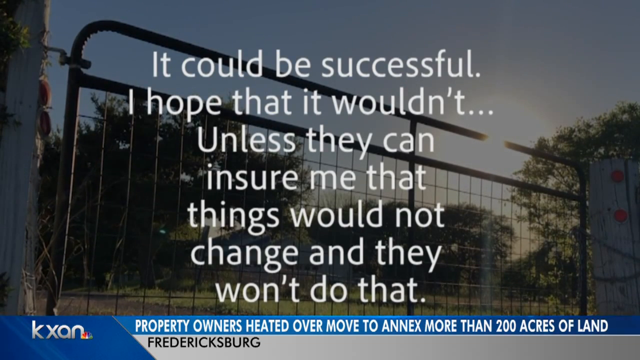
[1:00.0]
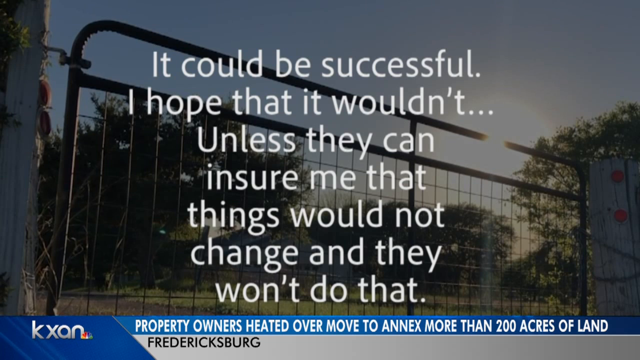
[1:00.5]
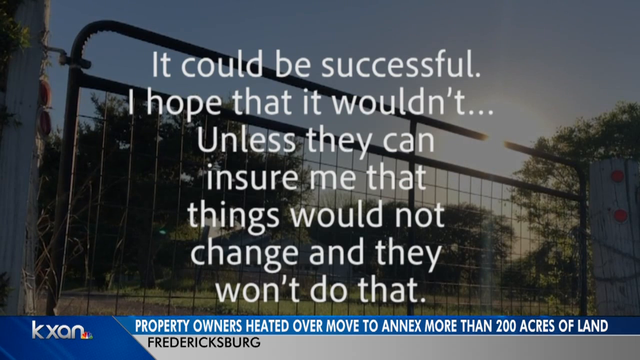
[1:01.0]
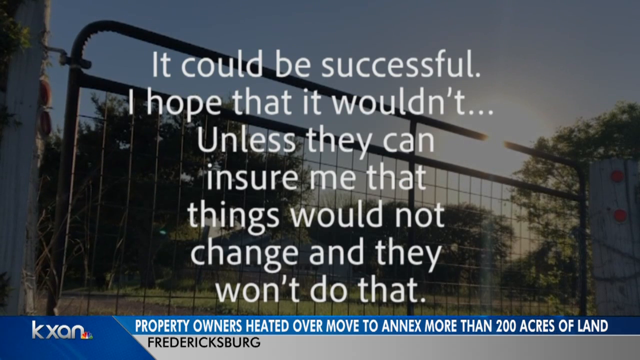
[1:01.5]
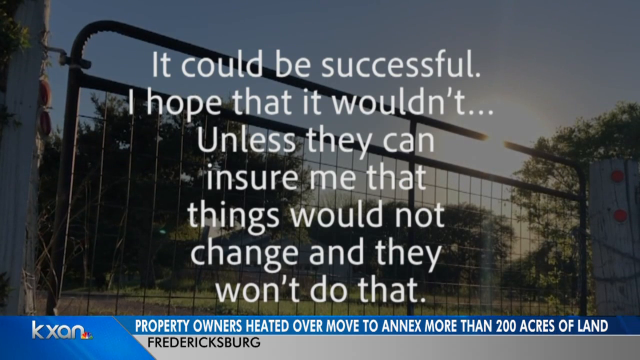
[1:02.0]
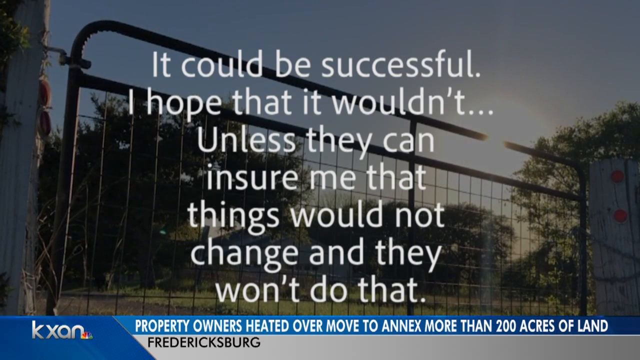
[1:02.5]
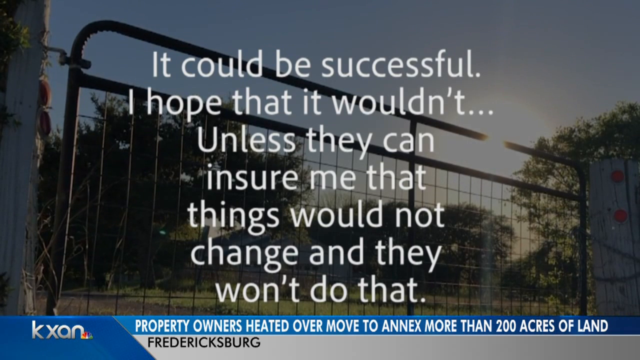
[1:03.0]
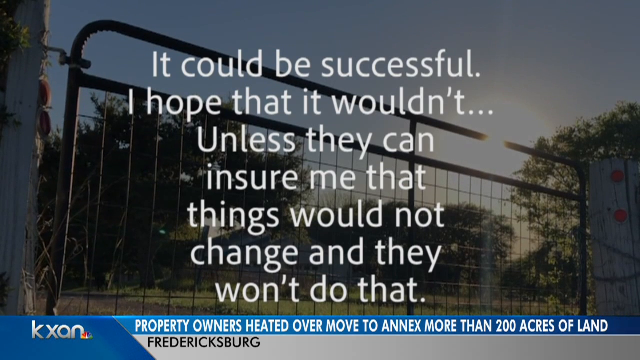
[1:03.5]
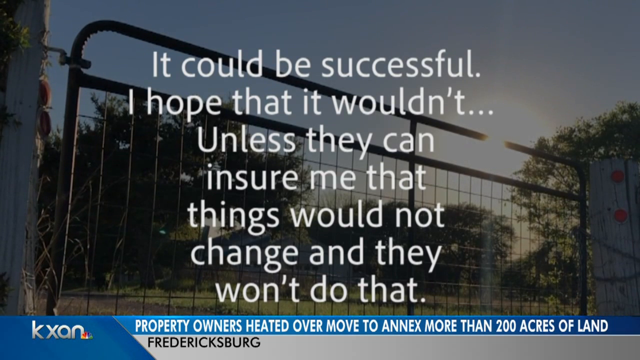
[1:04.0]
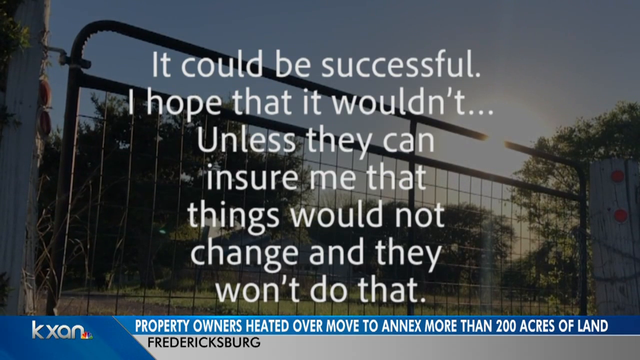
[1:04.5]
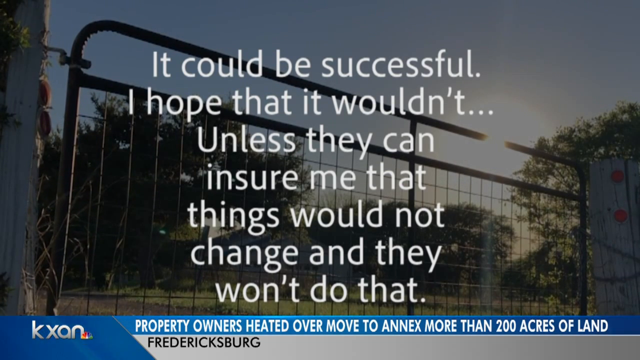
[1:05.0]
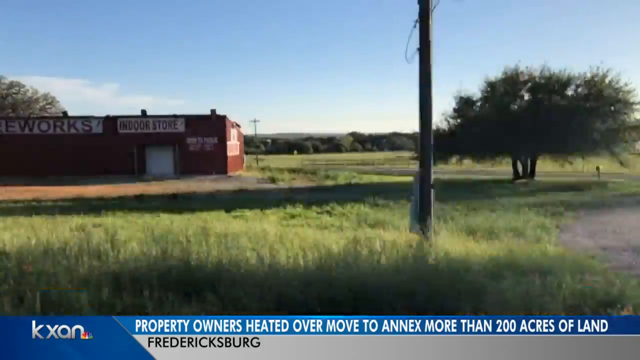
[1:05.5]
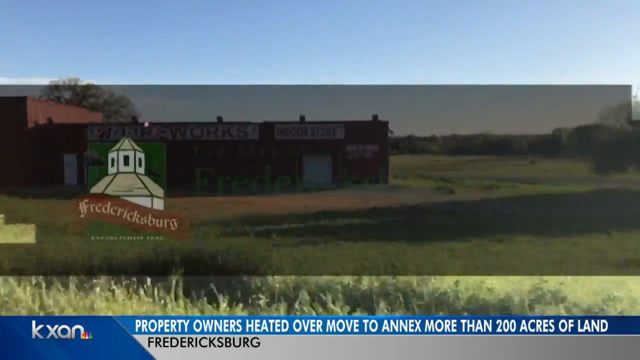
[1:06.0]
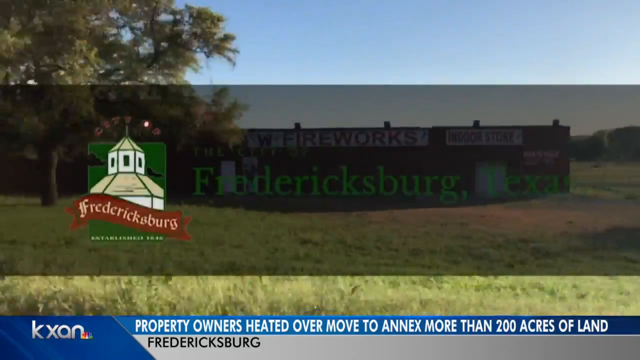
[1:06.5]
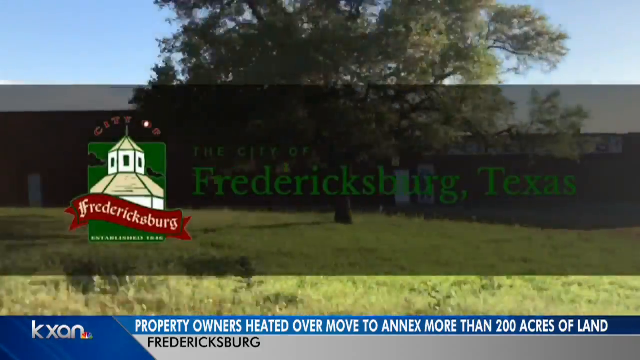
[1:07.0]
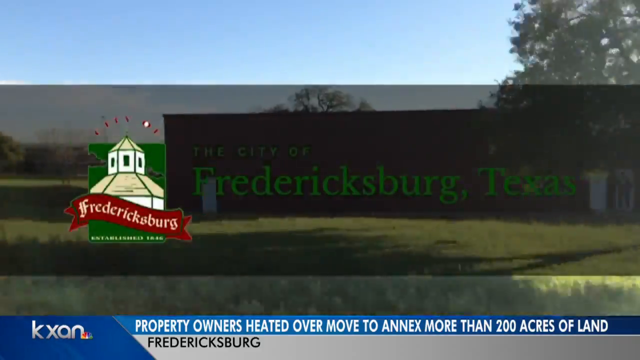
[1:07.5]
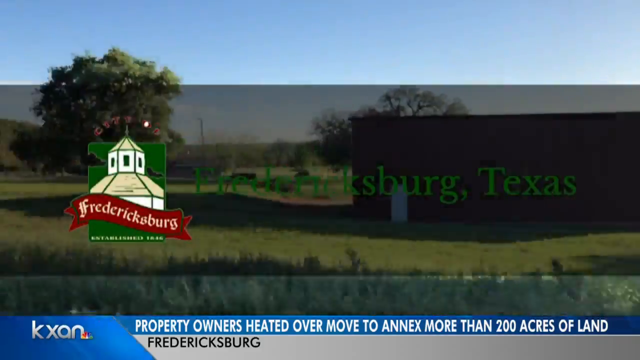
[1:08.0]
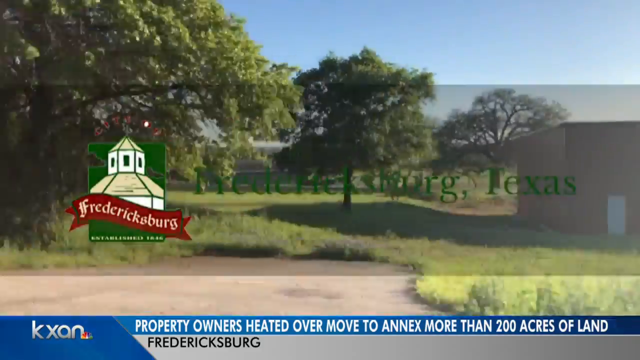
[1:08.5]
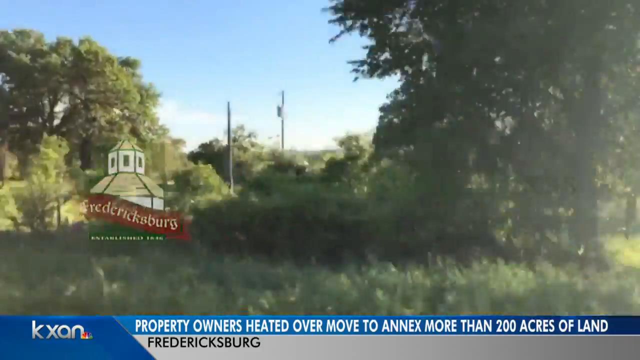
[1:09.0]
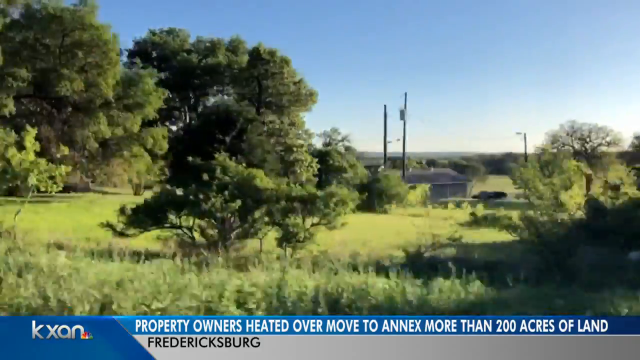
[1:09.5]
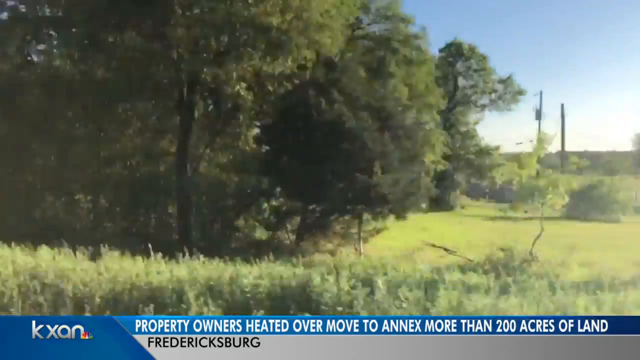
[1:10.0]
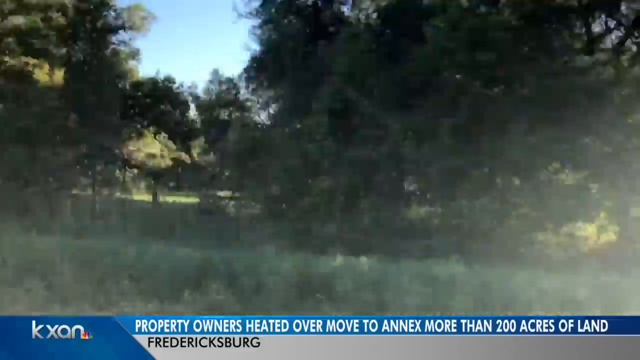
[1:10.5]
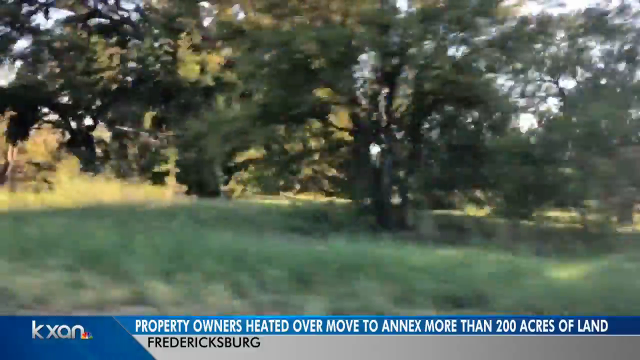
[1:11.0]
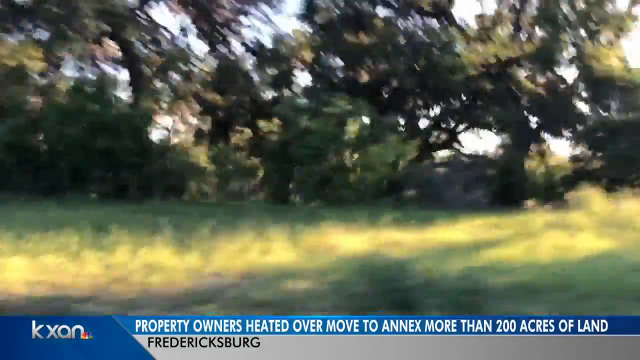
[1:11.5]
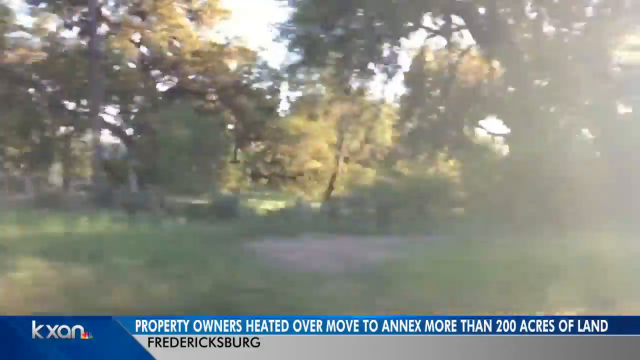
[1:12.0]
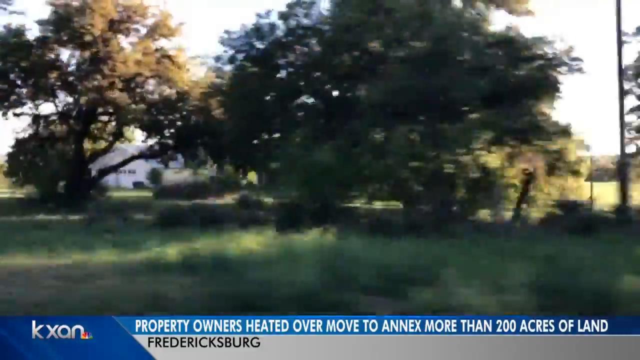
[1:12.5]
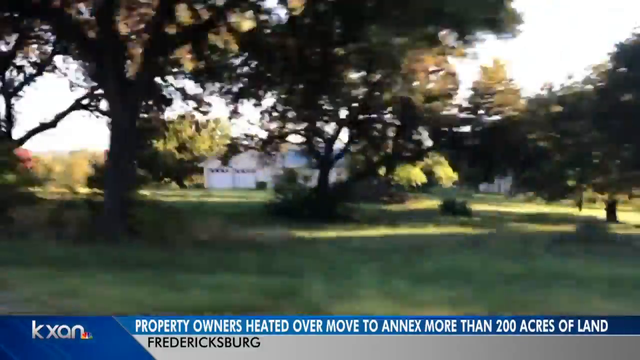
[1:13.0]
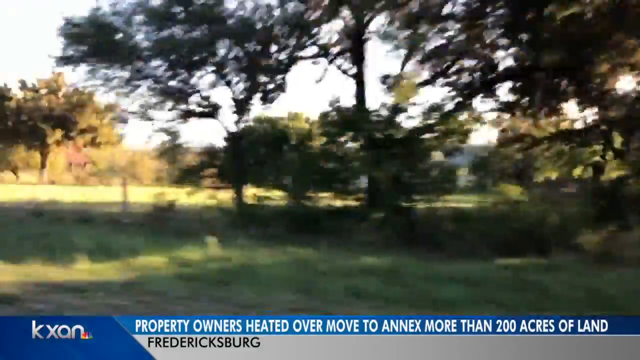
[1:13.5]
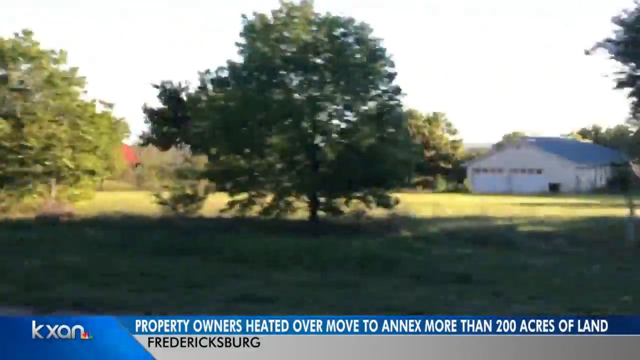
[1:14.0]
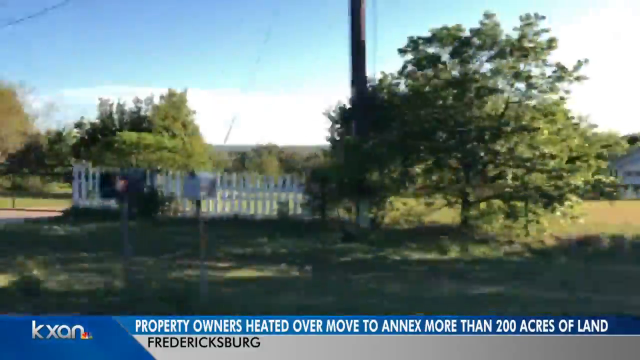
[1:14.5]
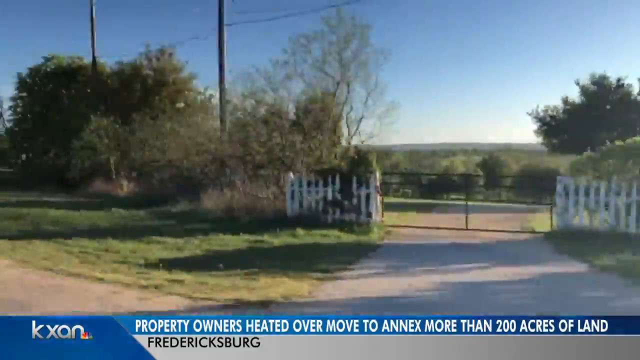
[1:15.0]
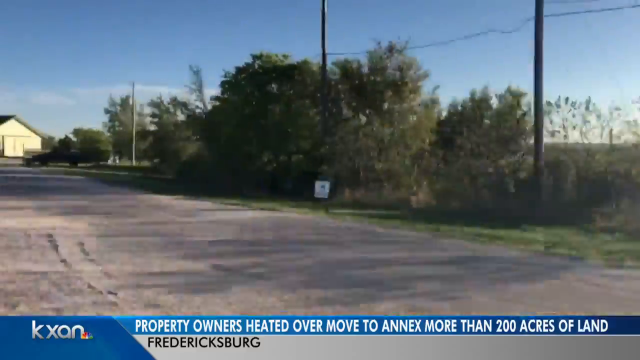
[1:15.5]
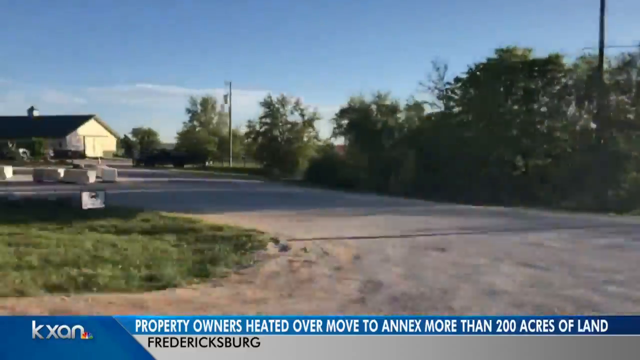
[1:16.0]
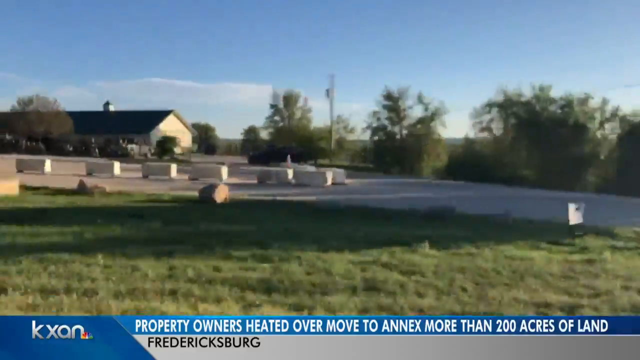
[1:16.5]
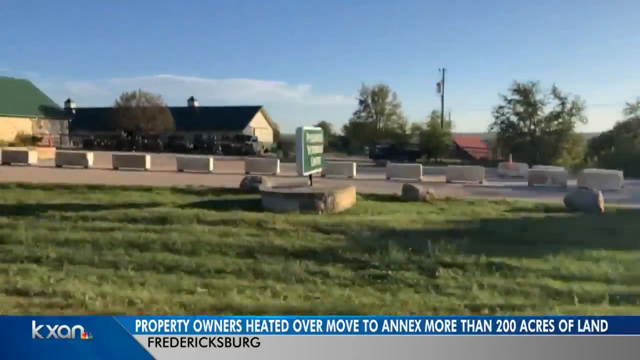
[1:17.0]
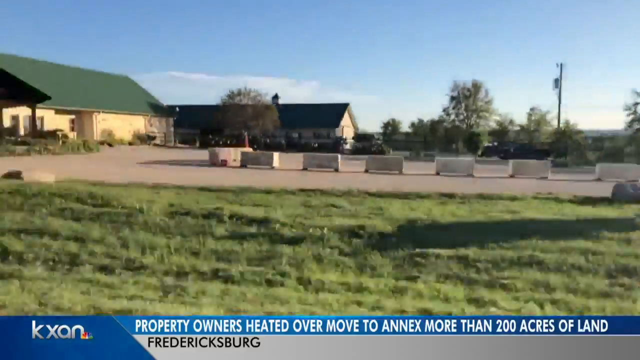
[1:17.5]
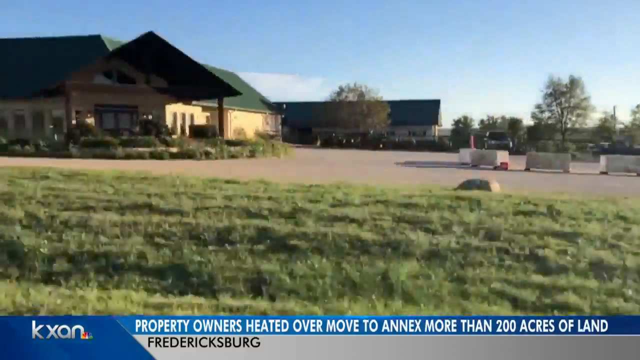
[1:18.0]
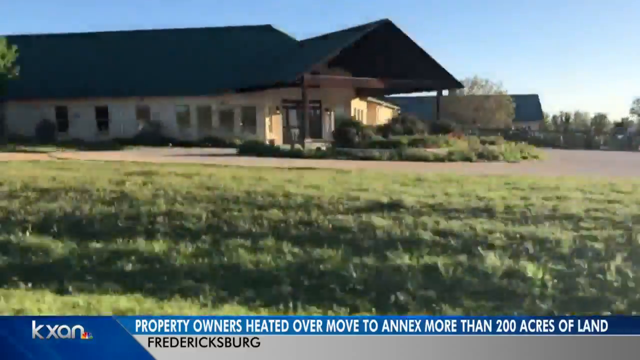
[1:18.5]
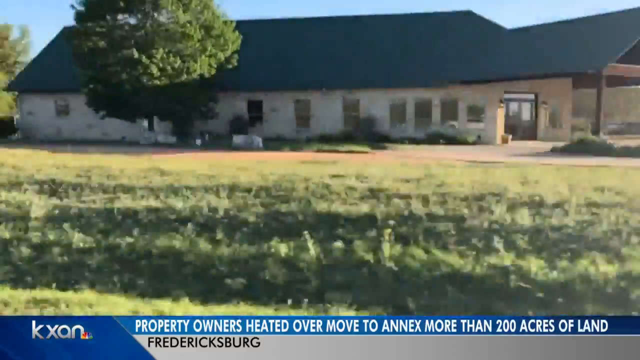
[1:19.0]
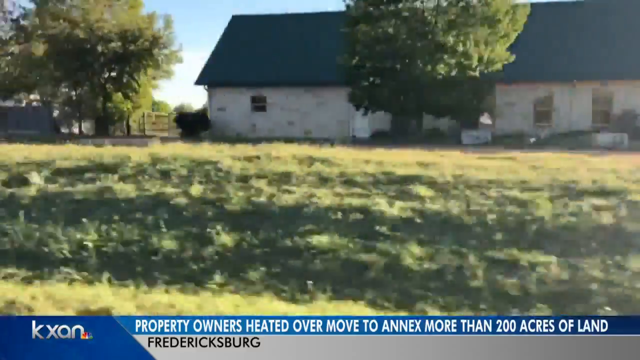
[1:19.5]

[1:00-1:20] The quote "it could be successful. I hope that it wouldn't, unless they can ensure me that things would not change and that they won't do that" appears in white text over a background showing the white barn, trees around it and the sun in the sky. The camera cuts to a very fast-moving shot of a car driving along a road, with trees, houses, and lots of grass visible in Fredericksburg. Text at the bottom reads "property owners moved to annex more than 200 acres of land Fredericksburg" as large buildings pass while the drive continues. A Fredericksburg, Texas logo then appears in the middle of the screen, reading "City of Fredericksburg"; it shows a white building with a red banner across it bearing "Fredericksburg" in white text in the middle.